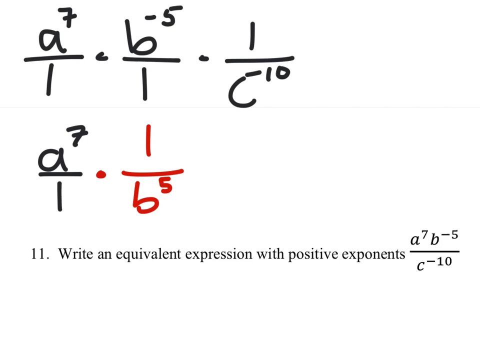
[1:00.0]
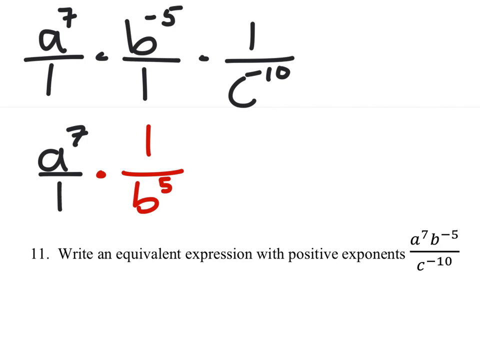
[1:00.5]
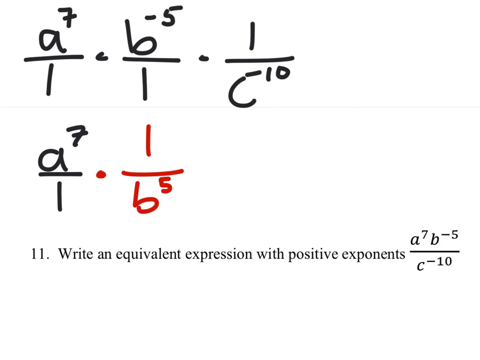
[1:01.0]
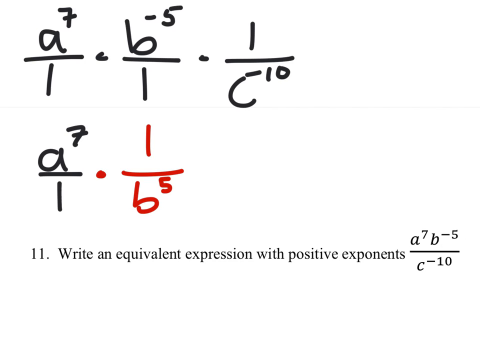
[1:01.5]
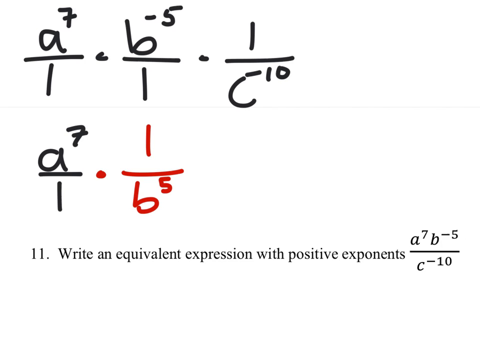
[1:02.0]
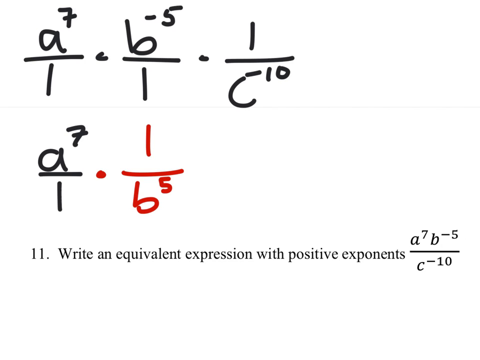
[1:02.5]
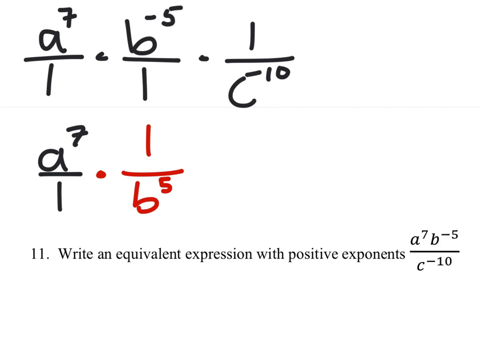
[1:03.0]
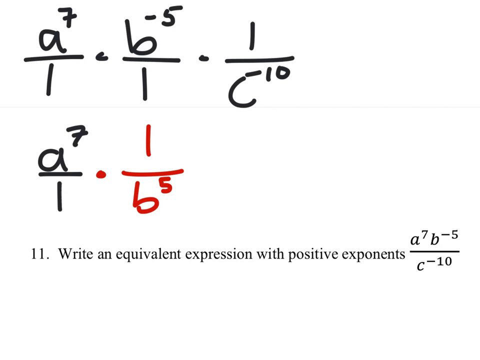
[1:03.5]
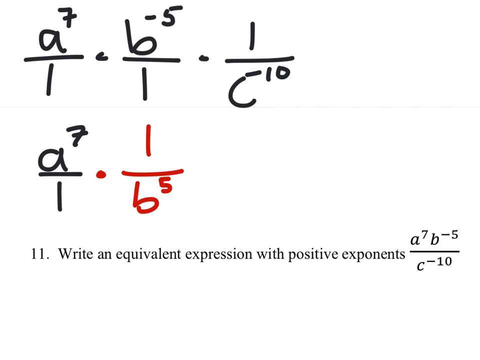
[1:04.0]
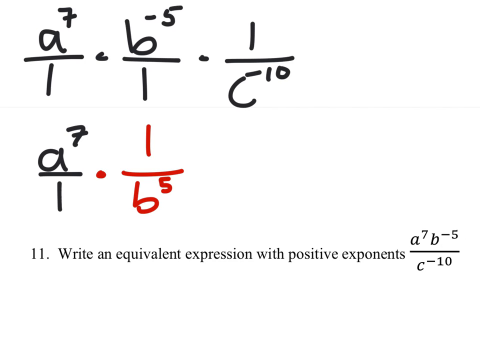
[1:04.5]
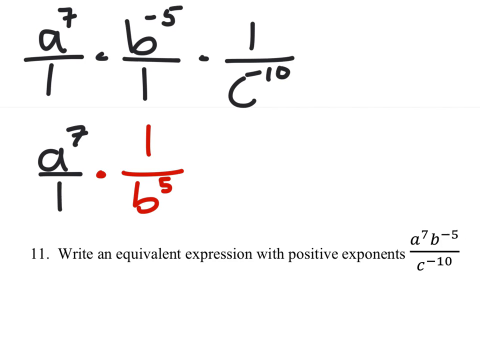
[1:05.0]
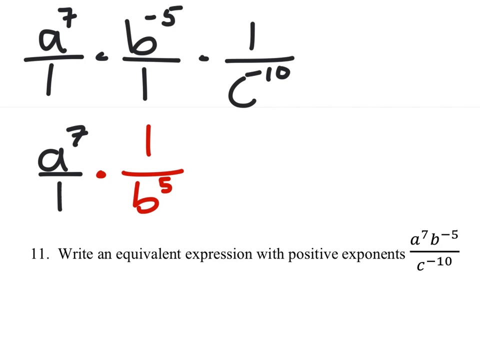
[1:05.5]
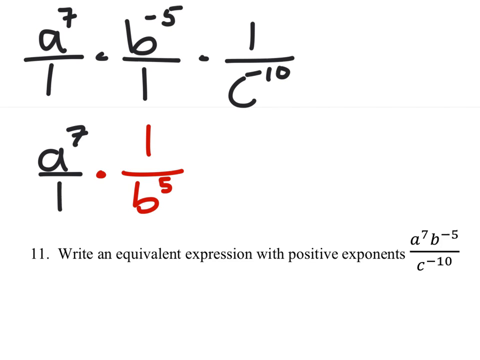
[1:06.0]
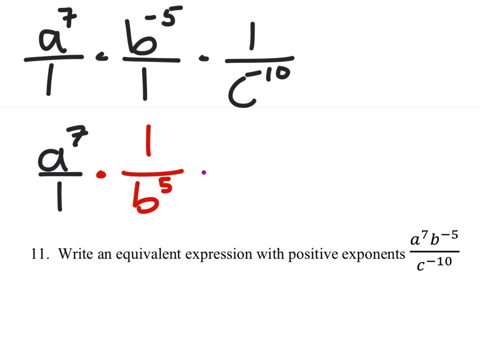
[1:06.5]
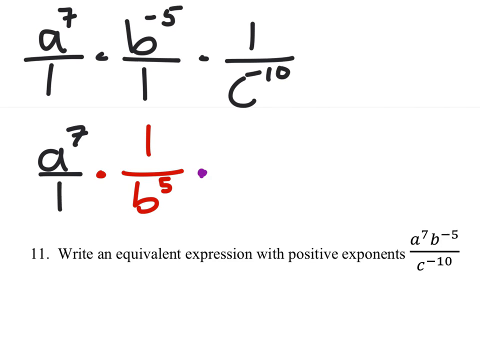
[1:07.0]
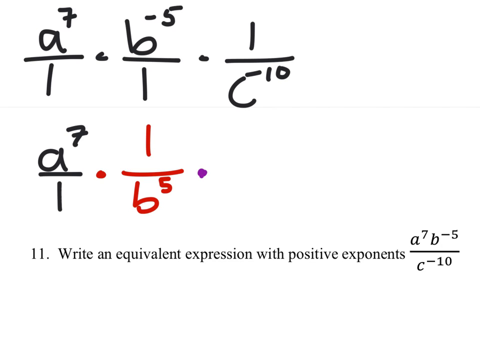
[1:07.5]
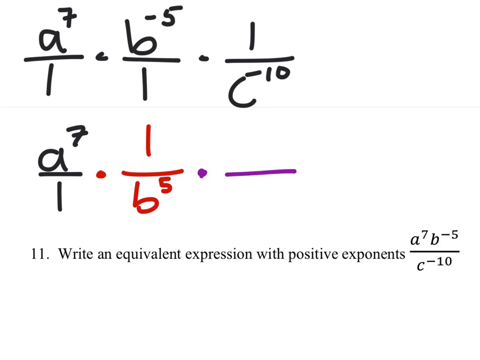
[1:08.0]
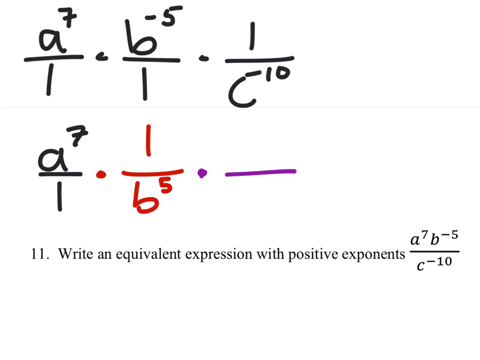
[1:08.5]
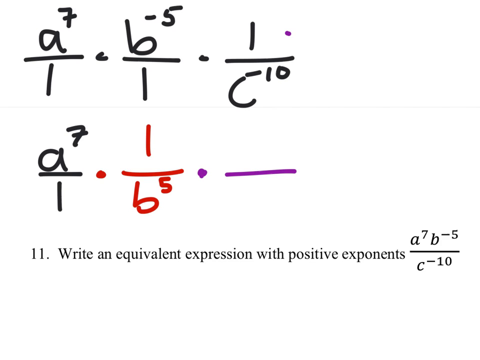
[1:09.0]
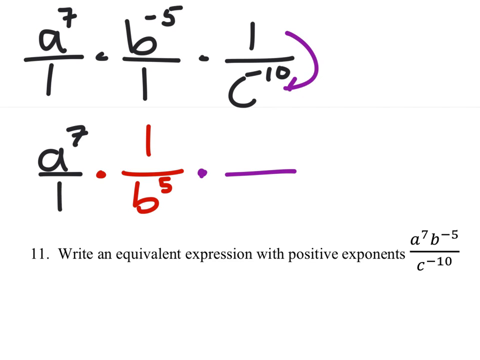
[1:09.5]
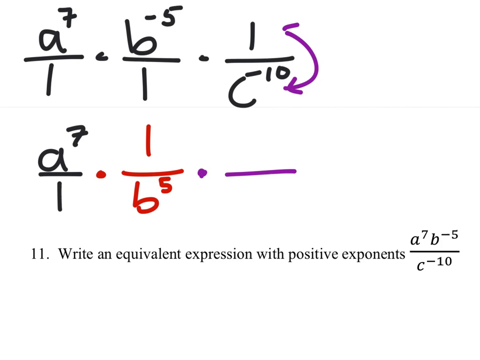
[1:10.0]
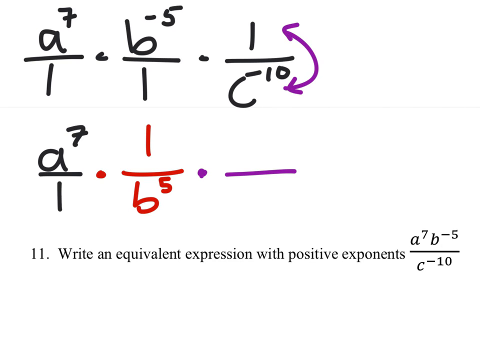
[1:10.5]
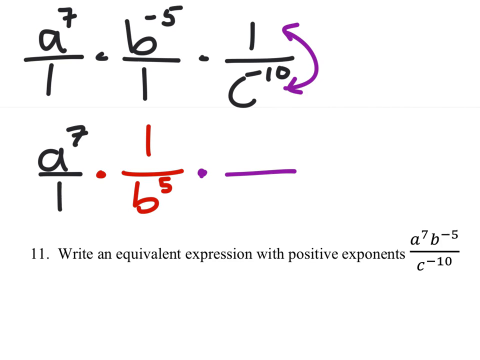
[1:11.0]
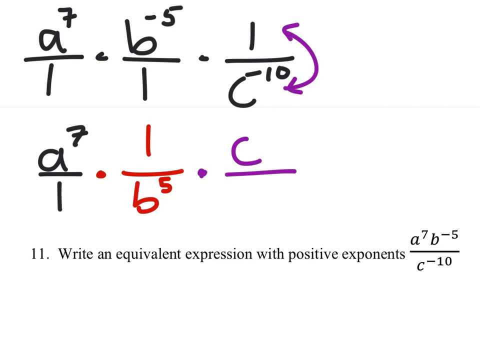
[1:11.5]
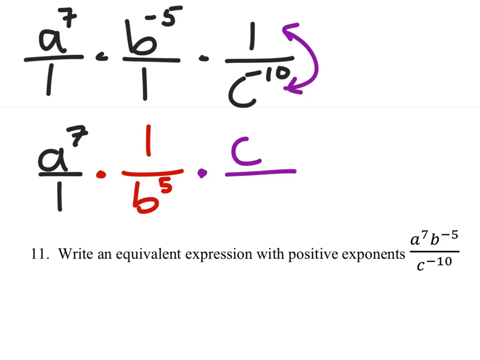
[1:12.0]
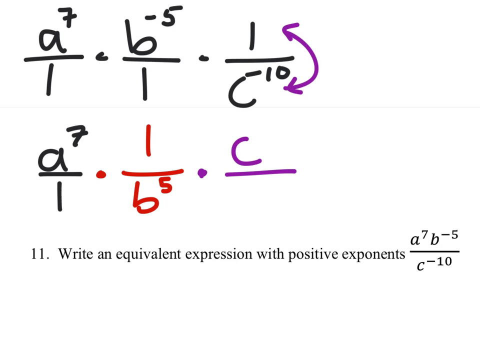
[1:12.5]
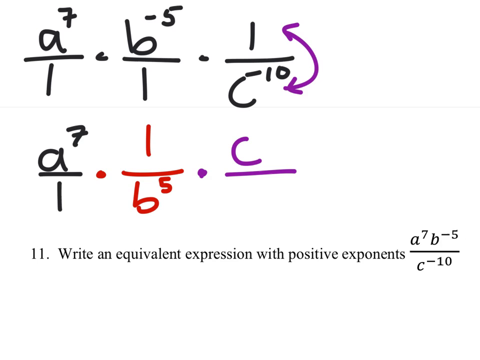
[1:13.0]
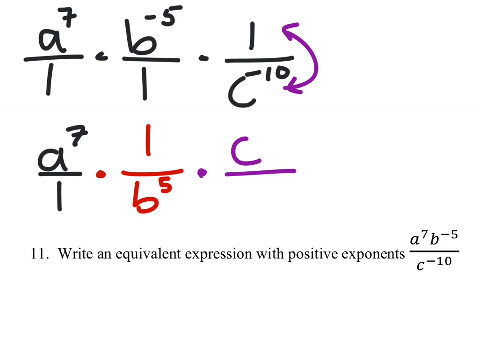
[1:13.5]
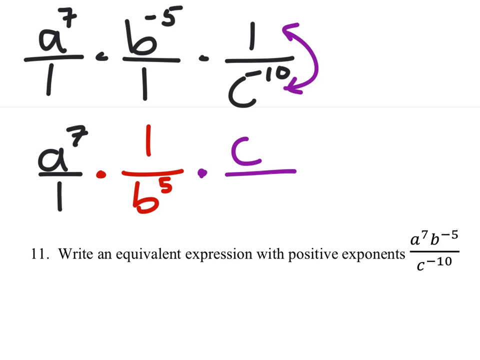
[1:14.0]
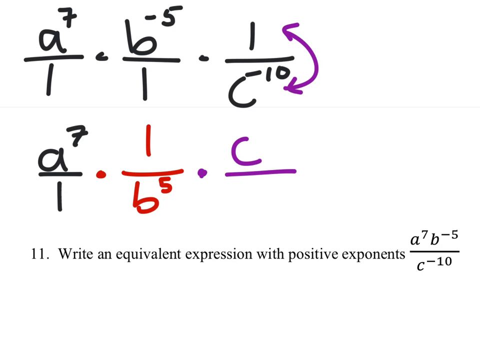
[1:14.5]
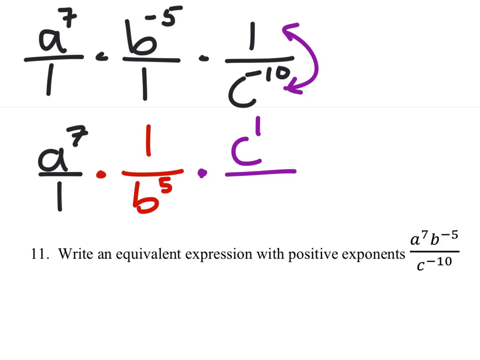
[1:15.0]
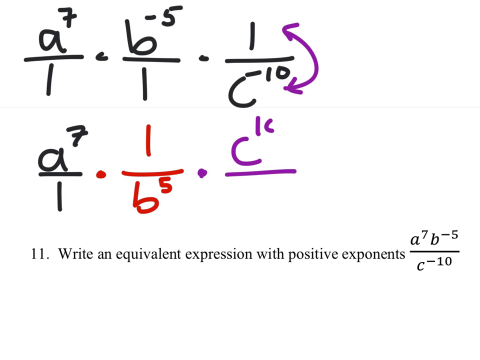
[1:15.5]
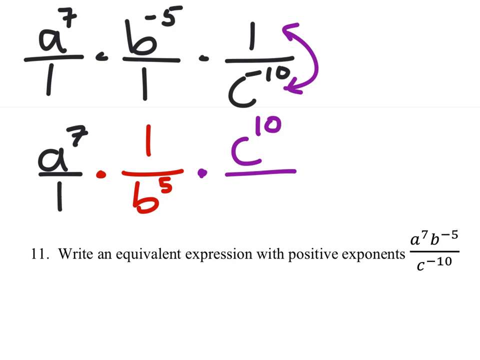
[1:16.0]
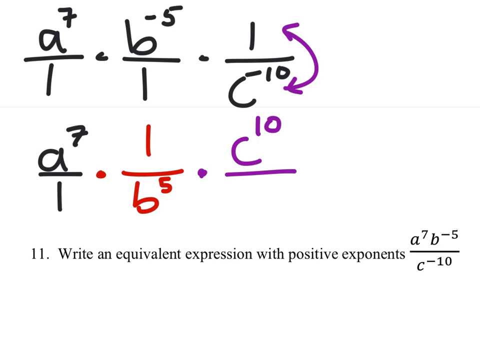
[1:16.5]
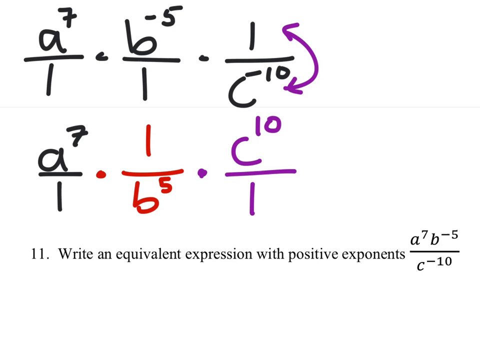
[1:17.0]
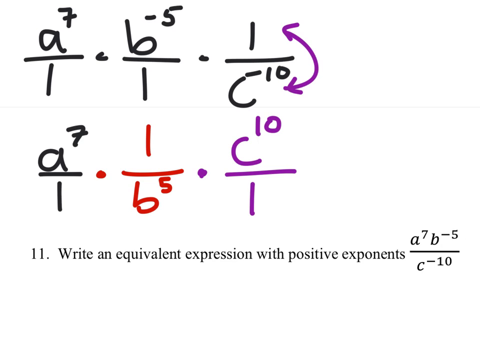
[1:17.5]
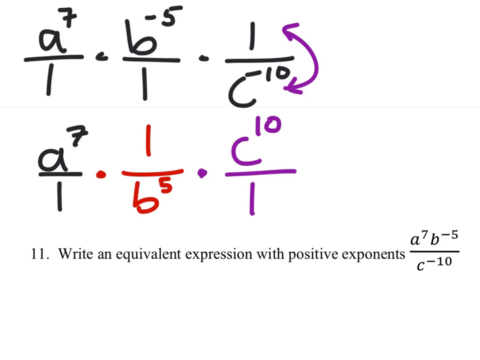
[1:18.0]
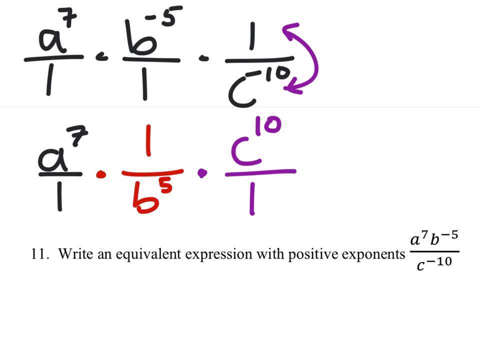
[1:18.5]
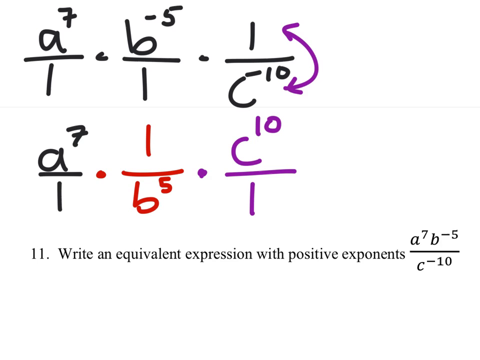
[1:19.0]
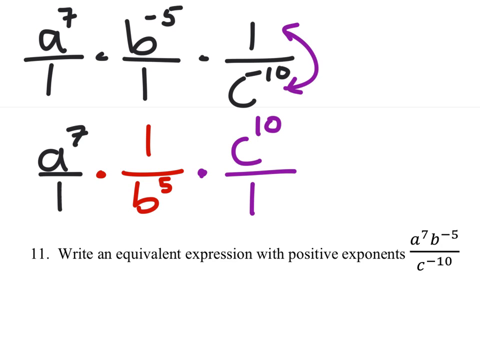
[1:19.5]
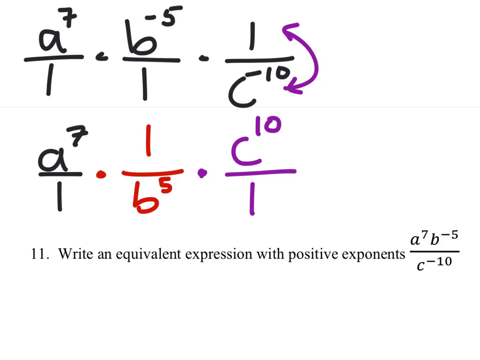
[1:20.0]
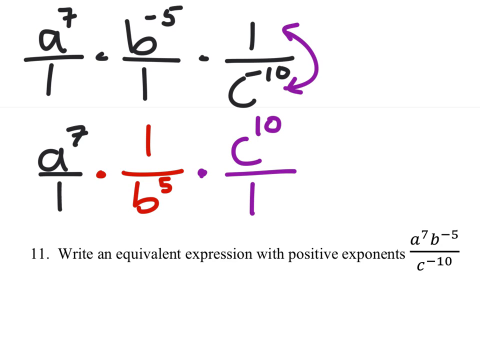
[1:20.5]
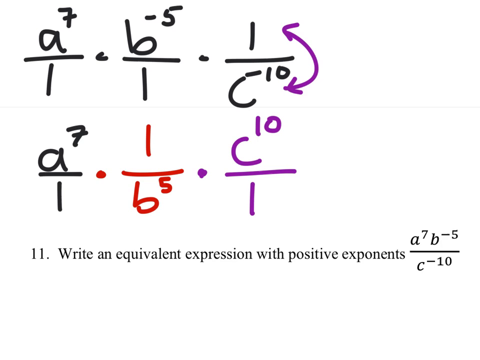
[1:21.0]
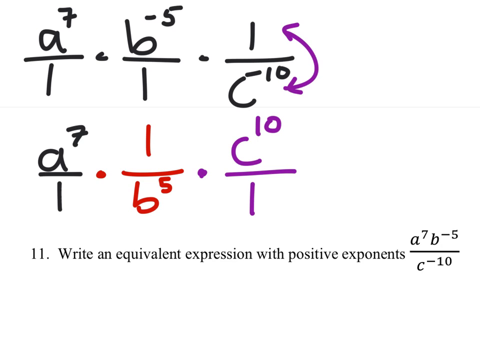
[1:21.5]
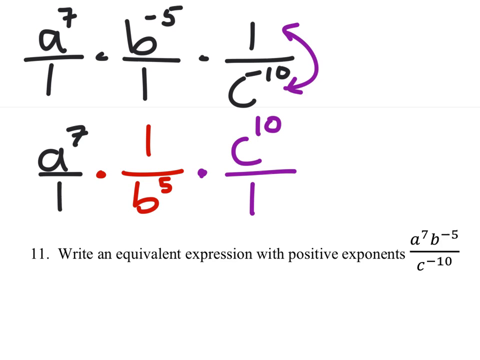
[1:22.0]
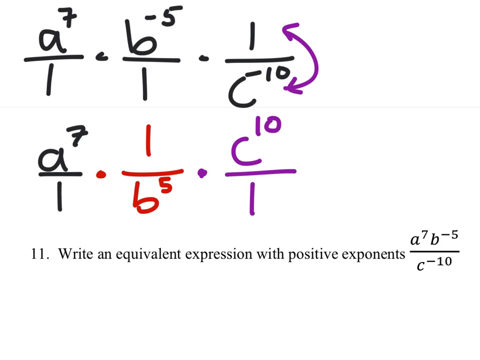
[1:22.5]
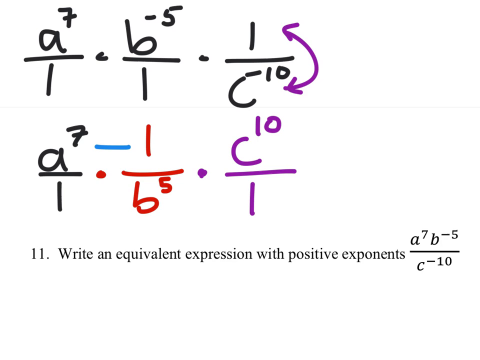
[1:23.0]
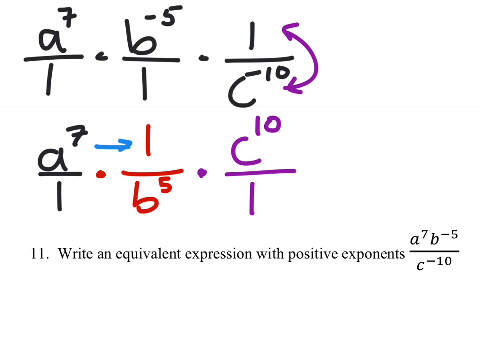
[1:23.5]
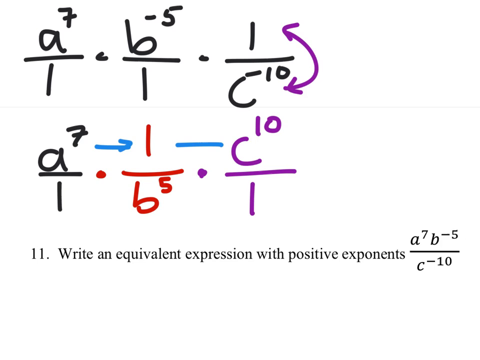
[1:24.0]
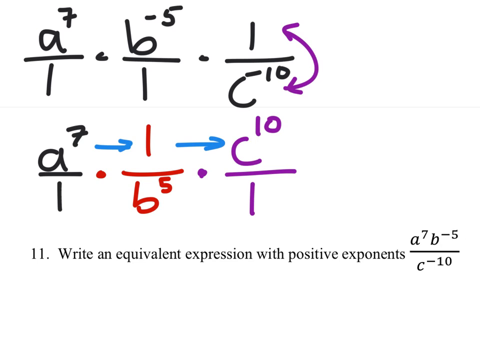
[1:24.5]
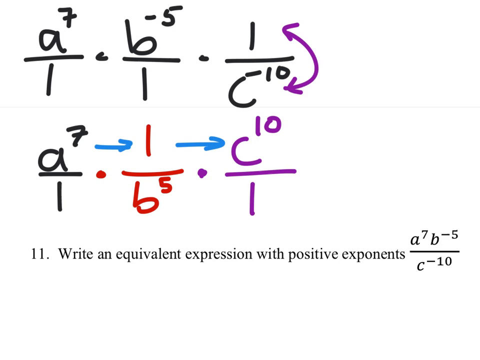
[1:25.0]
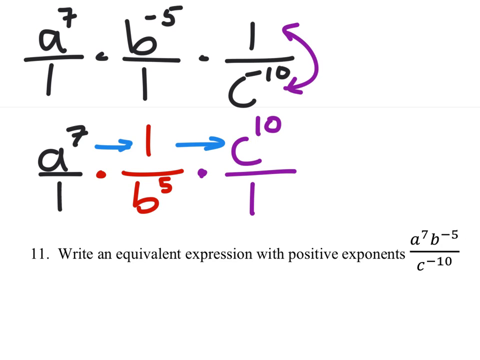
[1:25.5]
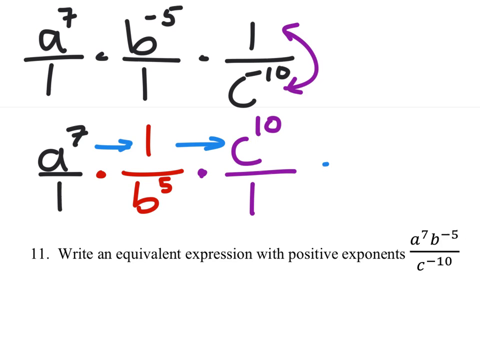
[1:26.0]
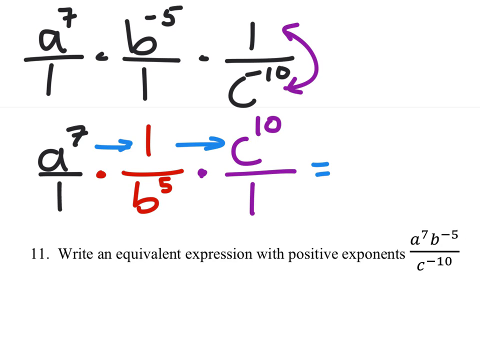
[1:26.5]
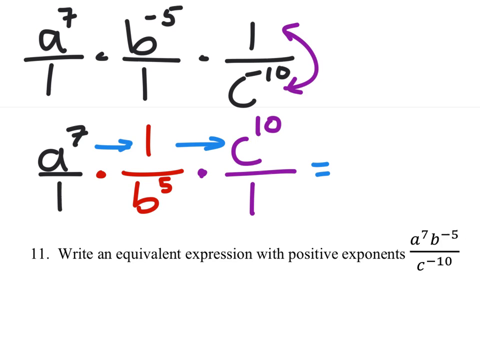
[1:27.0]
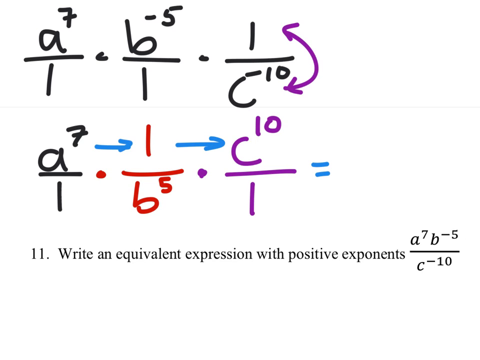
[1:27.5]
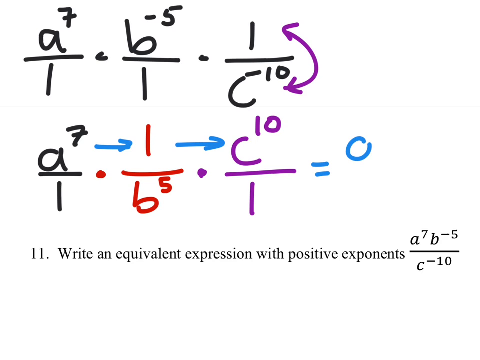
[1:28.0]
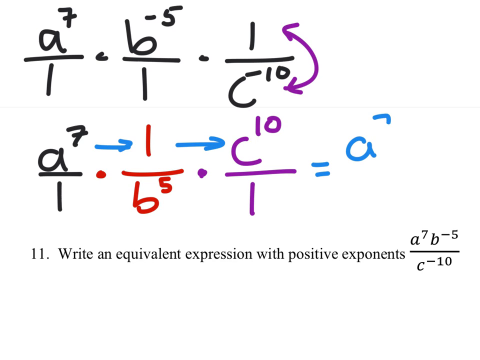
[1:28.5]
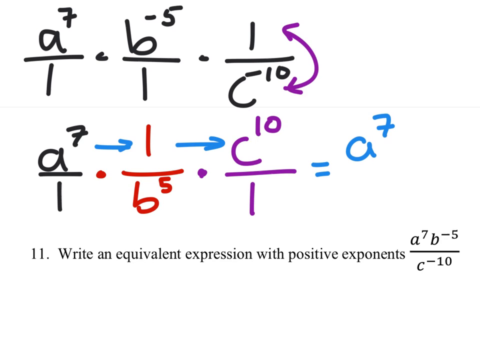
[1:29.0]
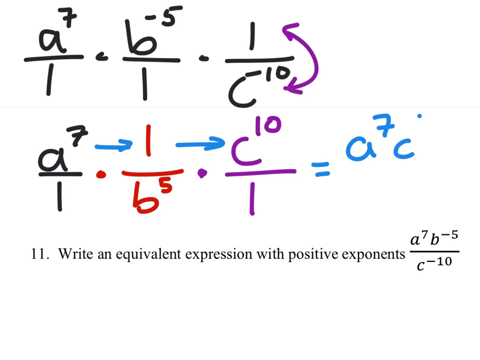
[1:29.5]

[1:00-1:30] A purple marking pen writes a dot and then a dash. Up by the first three written terms, an arrow is drawn in purple as well; the sign has two arrows, one pointing to 1 and the other pointing to c to the exponent 10. The purple pen then writes c to the exponent 10 divided by 1, so the c term is now on top and the 1 is below, changing the expression. The writing now contains black, red and purple.